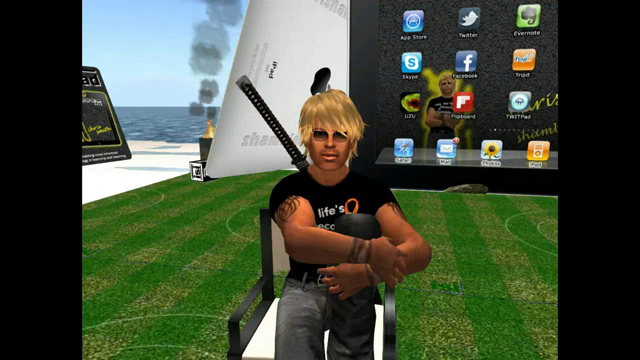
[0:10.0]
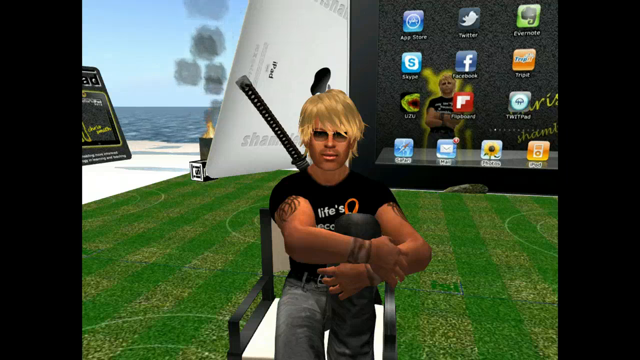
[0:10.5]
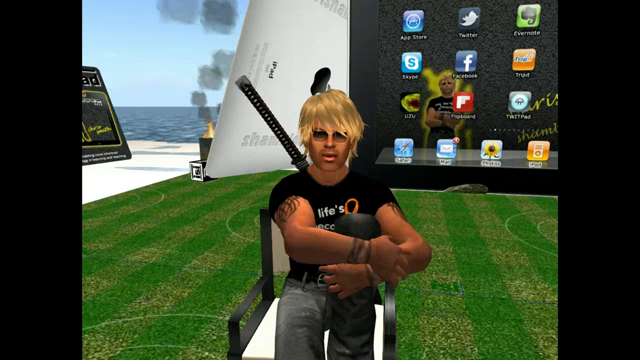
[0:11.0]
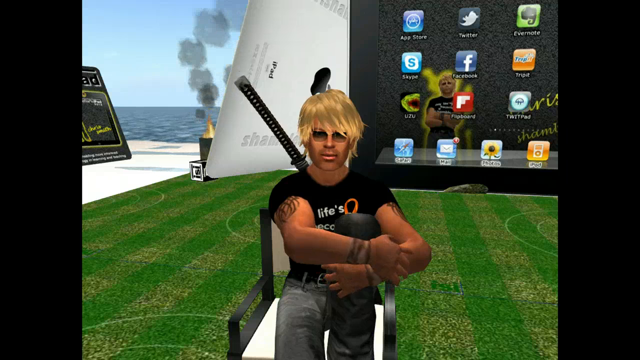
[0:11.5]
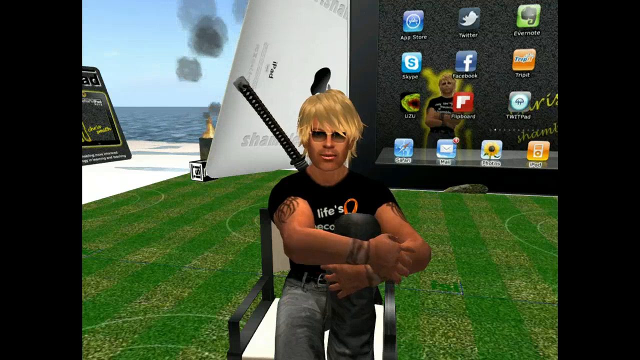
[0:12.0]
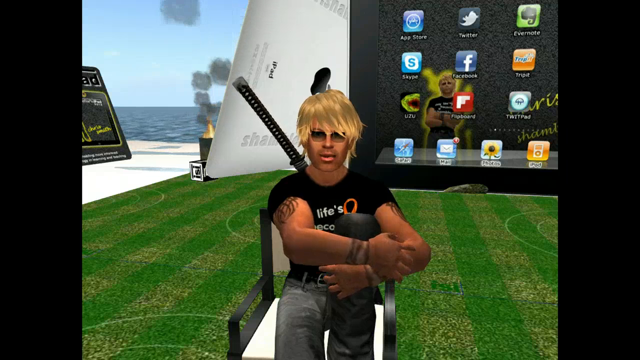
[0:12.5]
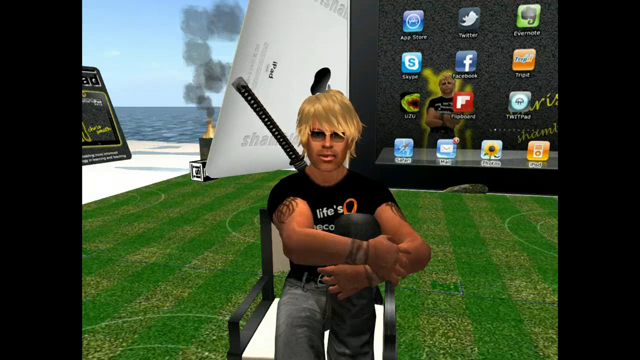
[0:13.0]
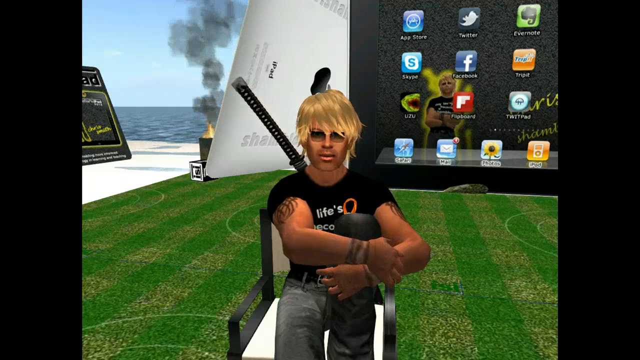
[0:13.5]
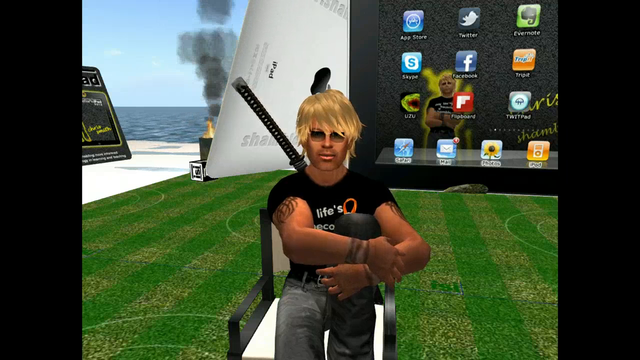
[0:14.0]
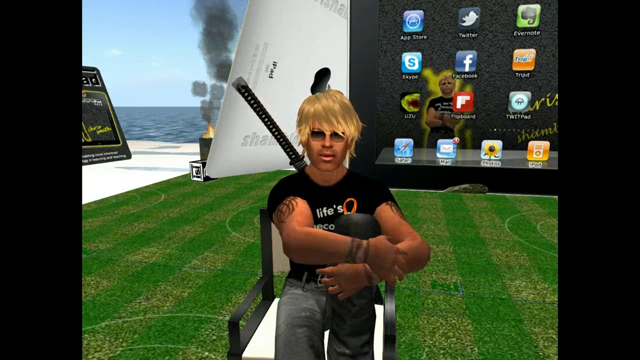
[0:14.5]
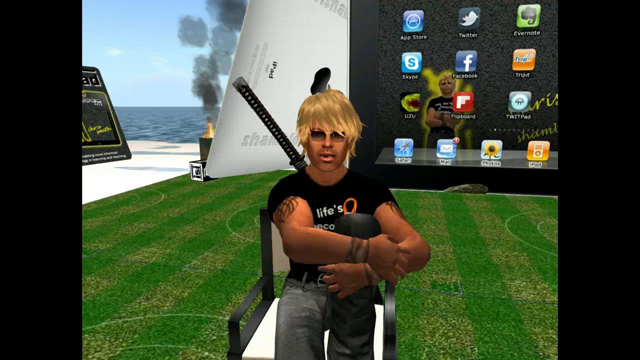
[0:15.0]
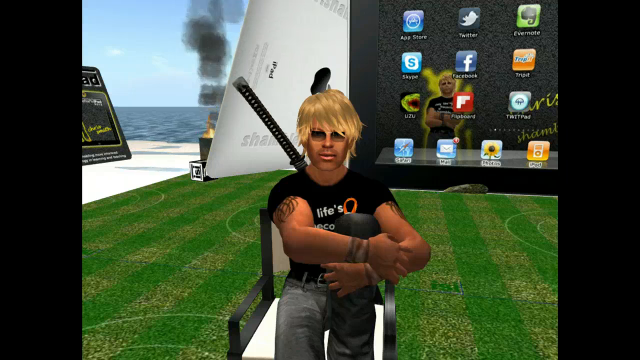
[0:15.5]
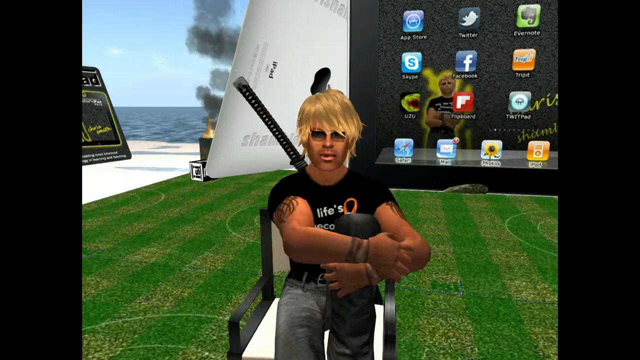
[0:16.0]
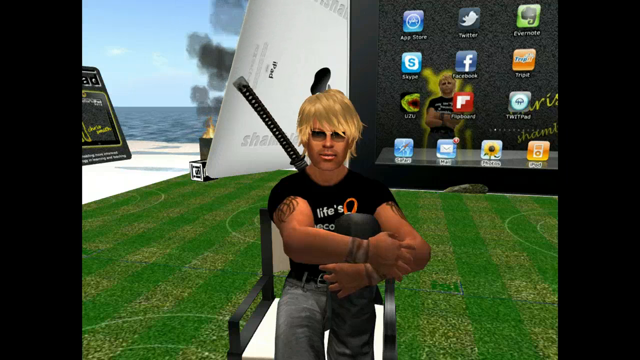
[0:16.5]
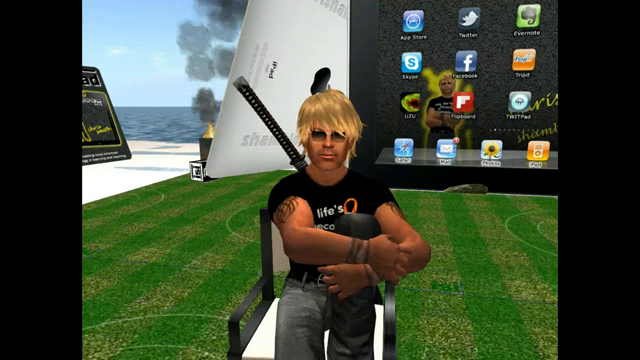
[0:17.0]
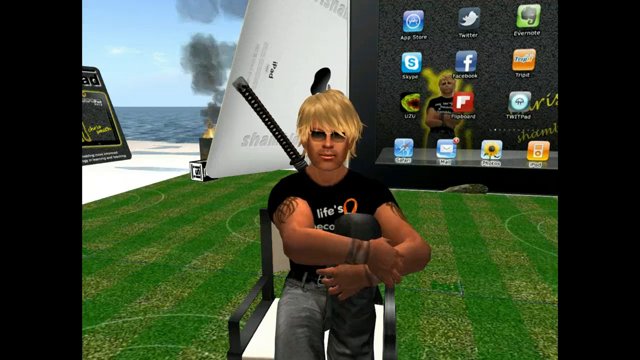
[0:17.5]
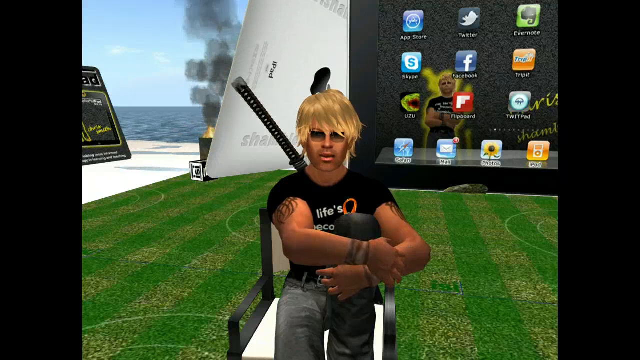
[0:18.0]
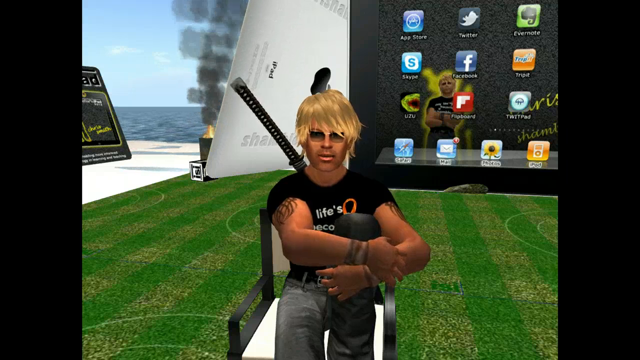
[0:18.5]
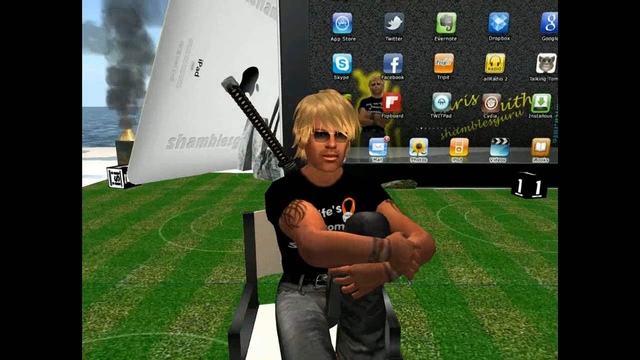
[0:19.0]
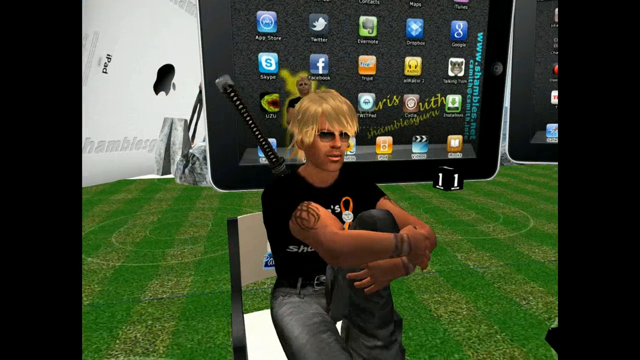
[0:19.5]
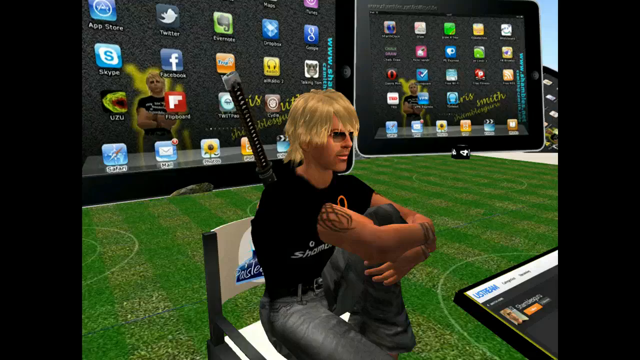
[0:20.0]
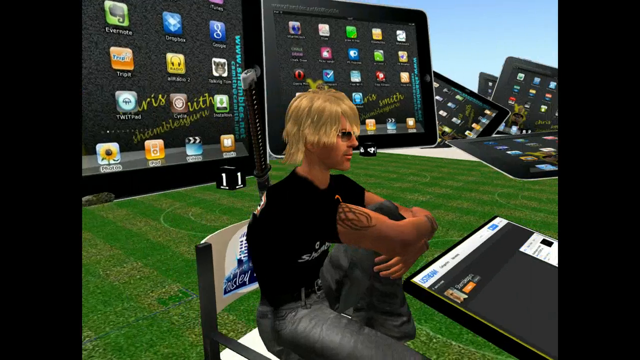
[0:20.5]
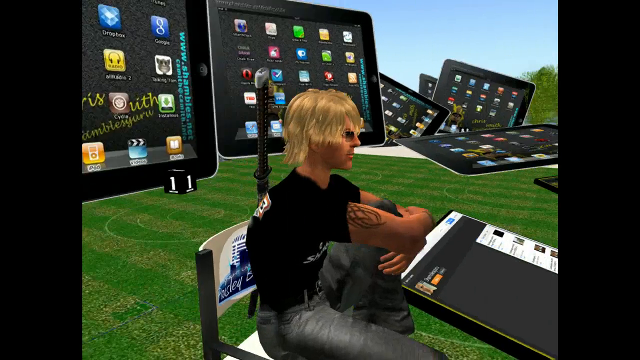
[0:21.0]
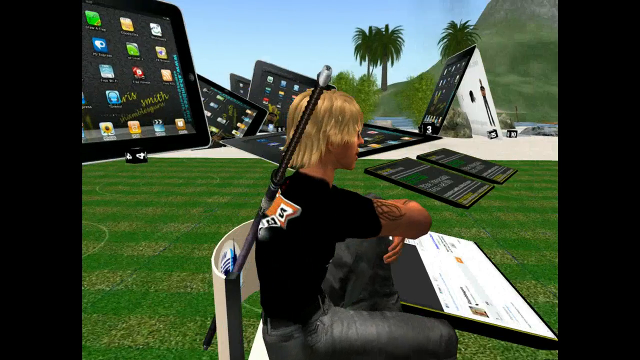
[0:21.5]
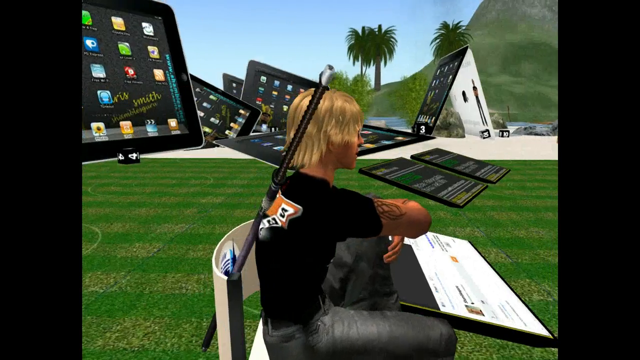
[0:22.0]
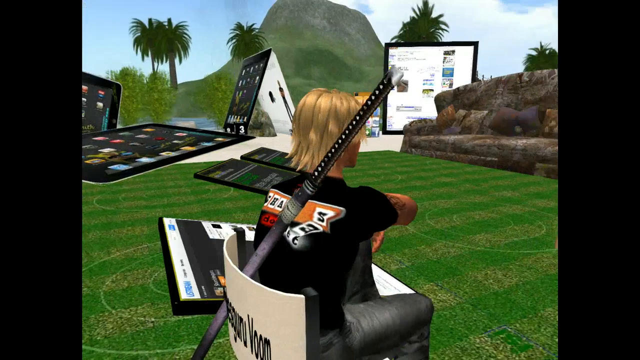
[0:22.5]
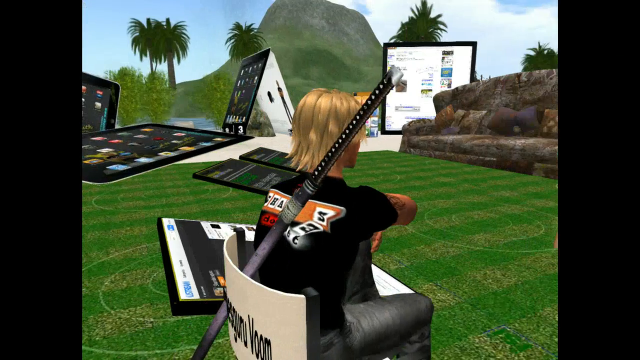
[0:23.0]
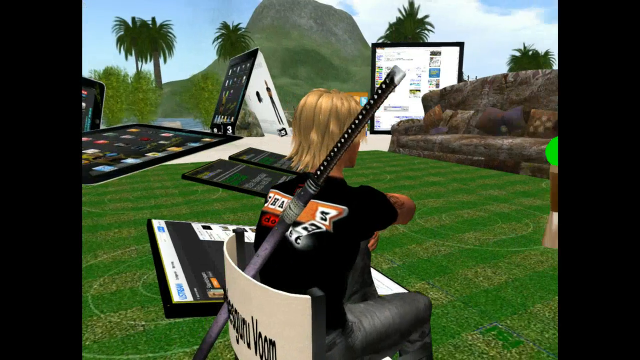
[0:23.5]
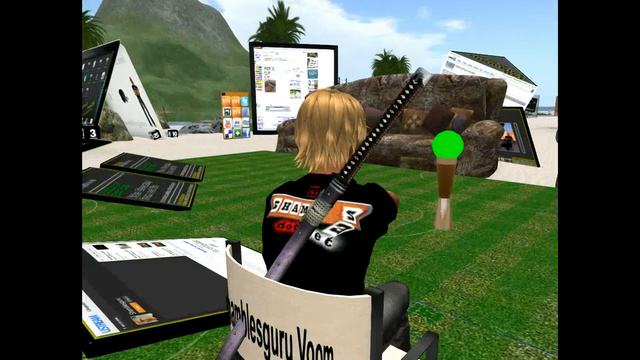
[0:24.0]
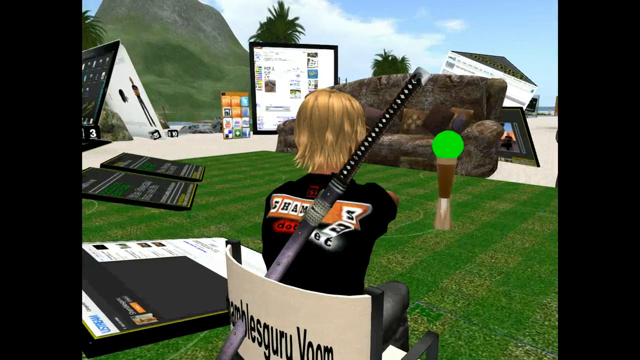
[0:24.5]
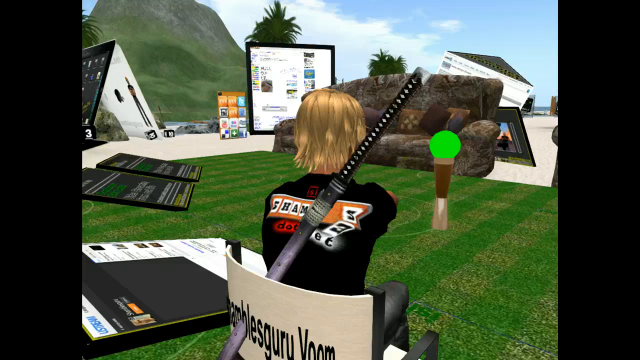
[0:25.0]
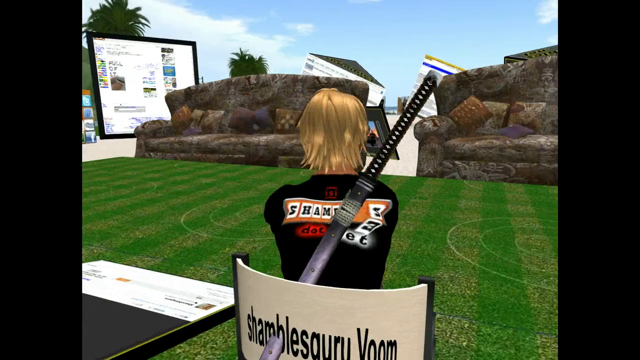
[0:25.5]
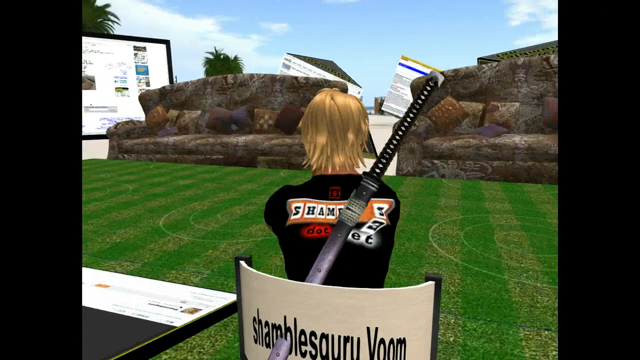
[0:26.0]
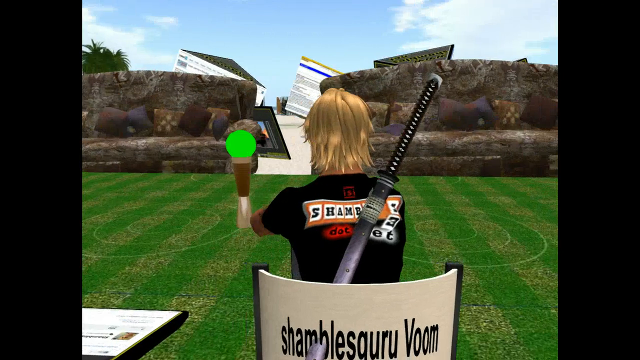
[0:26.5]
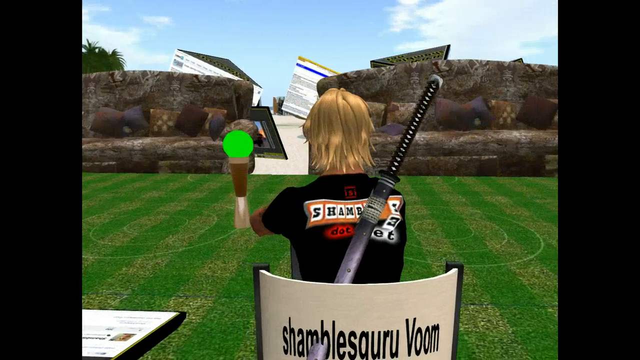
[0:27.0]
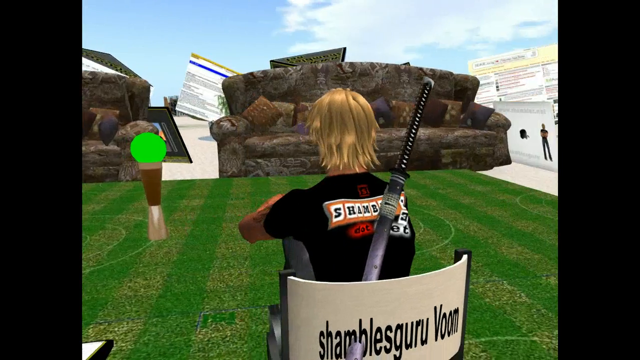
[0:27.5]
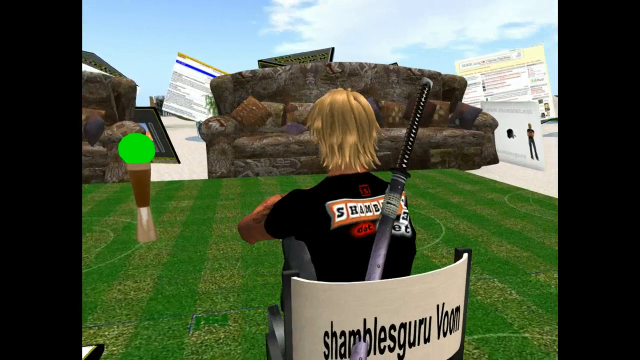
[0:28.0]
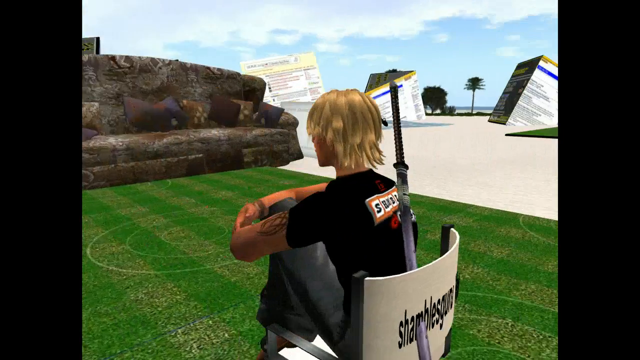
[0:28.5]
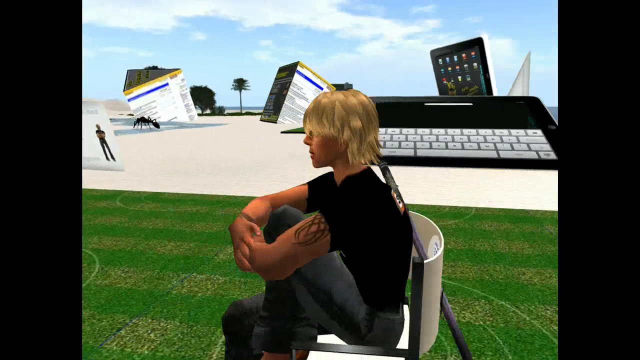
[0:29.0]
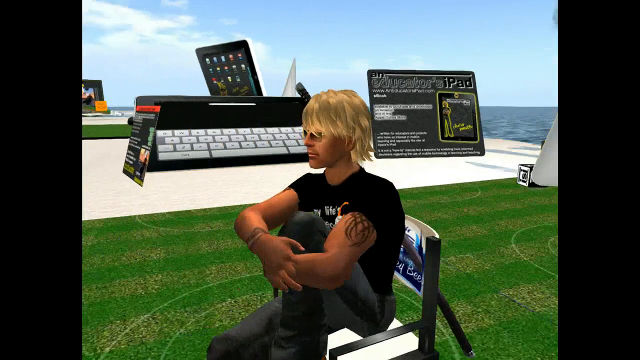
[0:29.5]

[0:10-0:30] The camera goes straight to a man sitting on a white chair. He wears black trousers and a black t-shirt and has short blonde hair. Behind him there is a gun in his bag. The camera turns around him so that he is seen from all angles. Behind him a screen shows the Facebook menu, and behind that screen is another Apple screen. The whole place is filled with screens showing different things. He sits in the middle of green grass, and next to the grass there seems to be a white pavement. The place looks like somewhere used for social media content or recording, and it looks colorful and very modern.